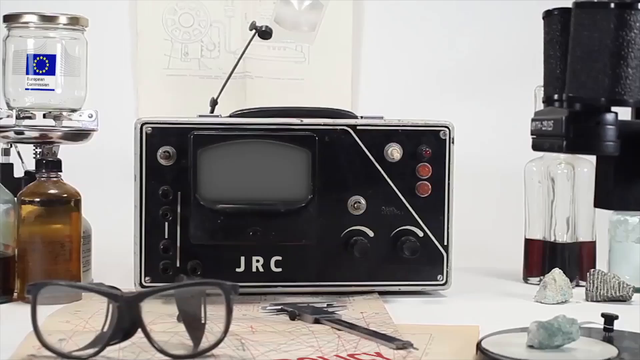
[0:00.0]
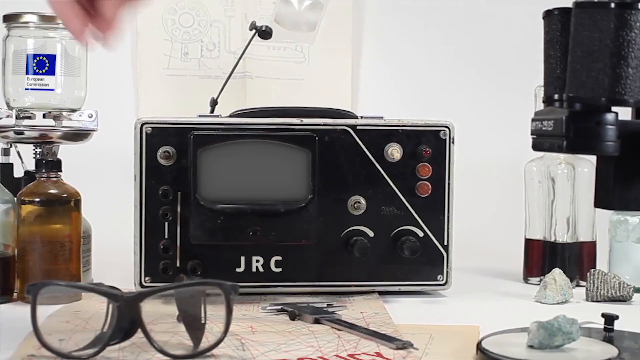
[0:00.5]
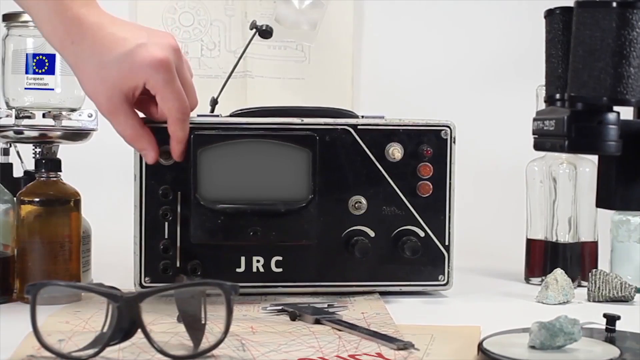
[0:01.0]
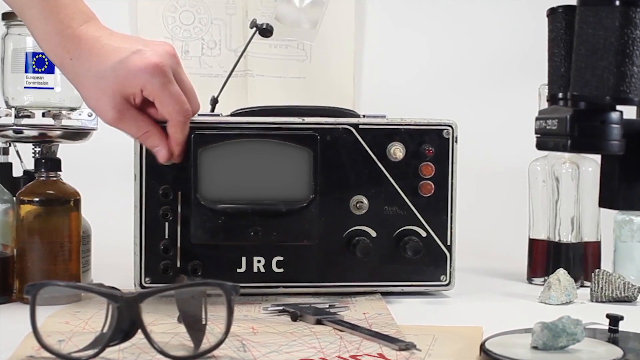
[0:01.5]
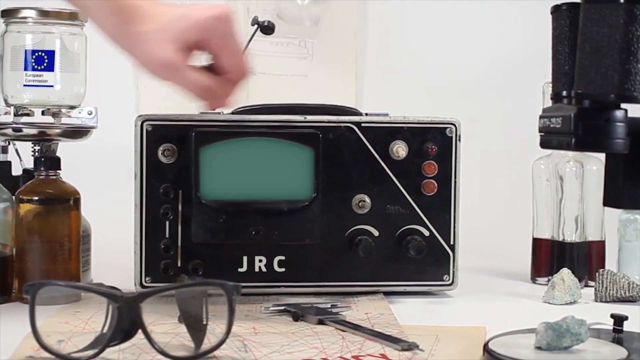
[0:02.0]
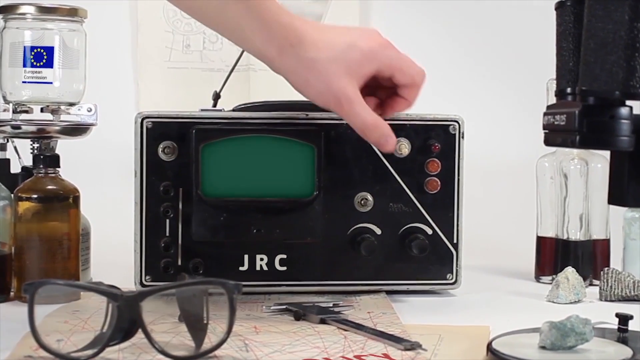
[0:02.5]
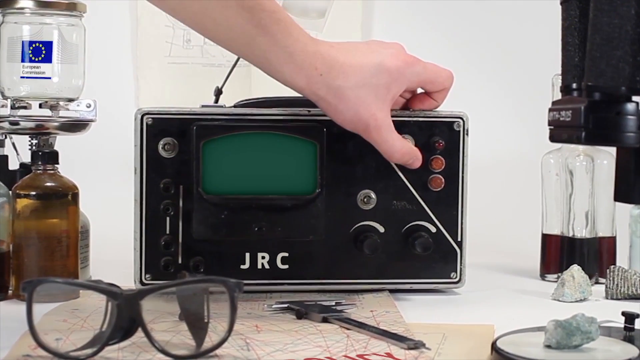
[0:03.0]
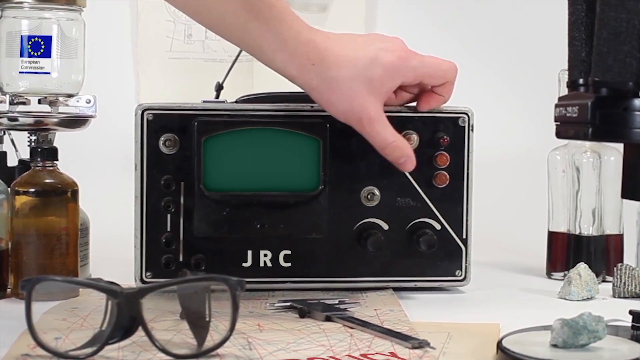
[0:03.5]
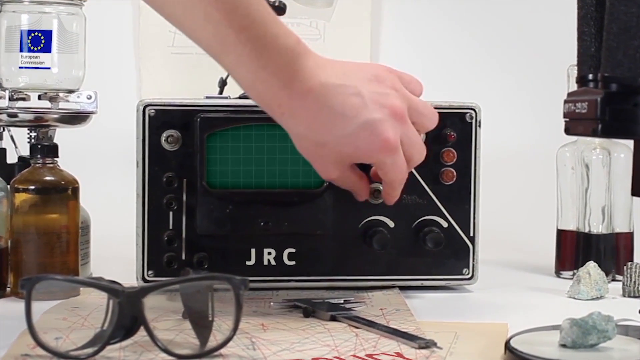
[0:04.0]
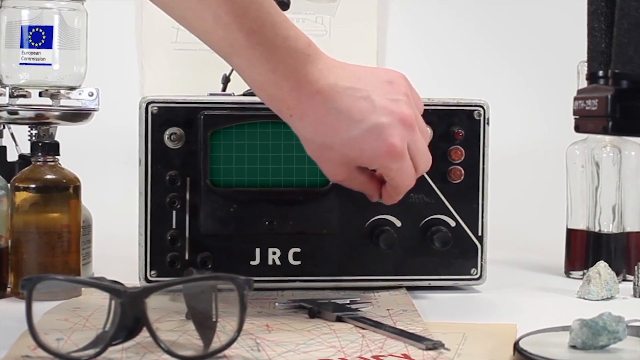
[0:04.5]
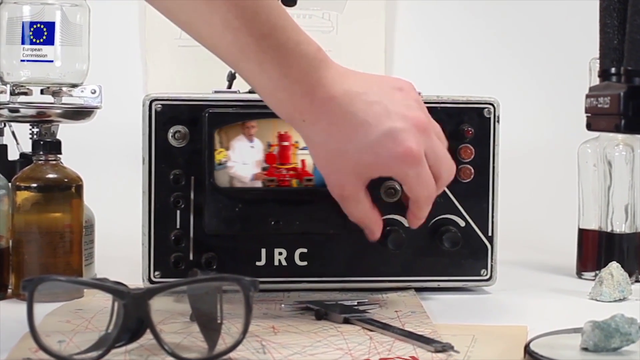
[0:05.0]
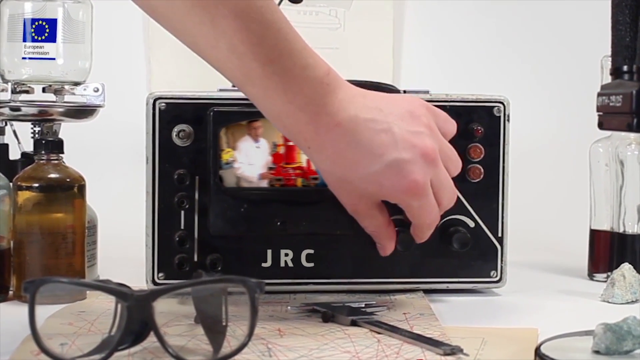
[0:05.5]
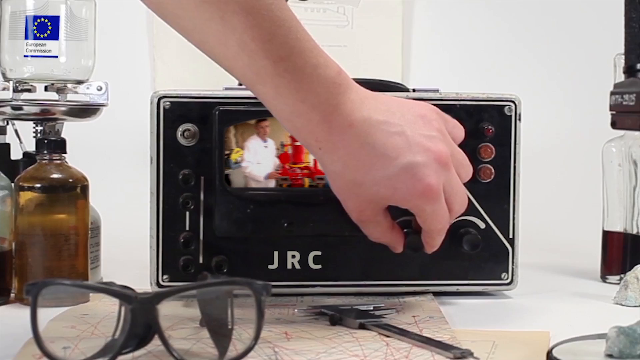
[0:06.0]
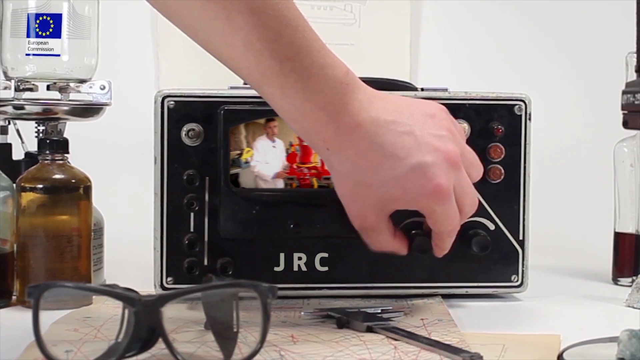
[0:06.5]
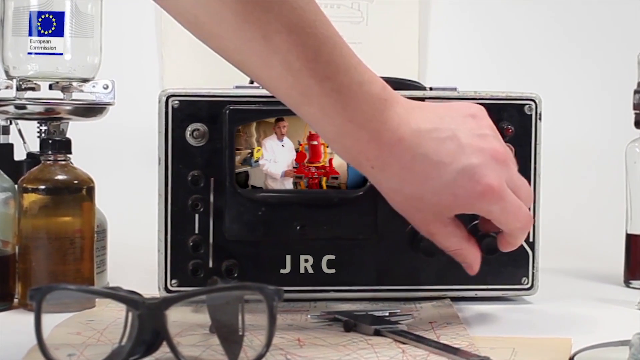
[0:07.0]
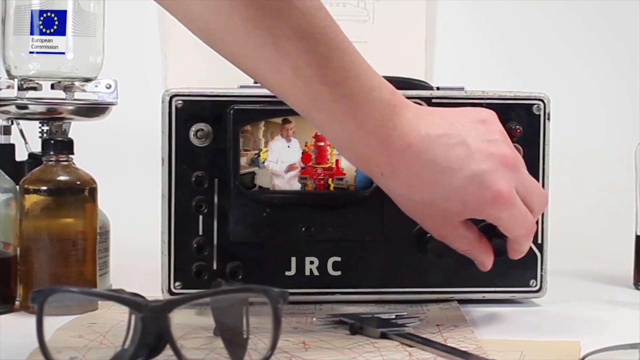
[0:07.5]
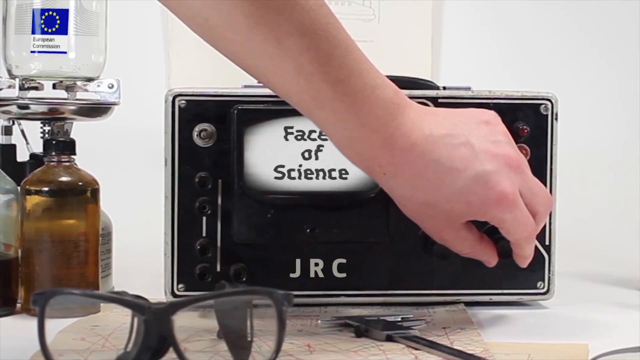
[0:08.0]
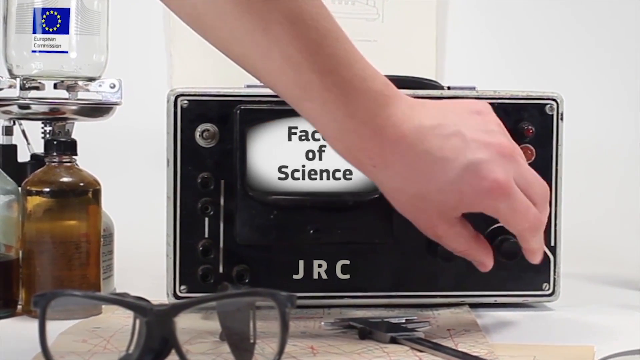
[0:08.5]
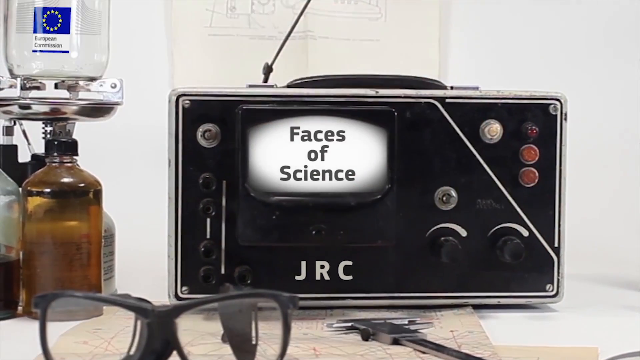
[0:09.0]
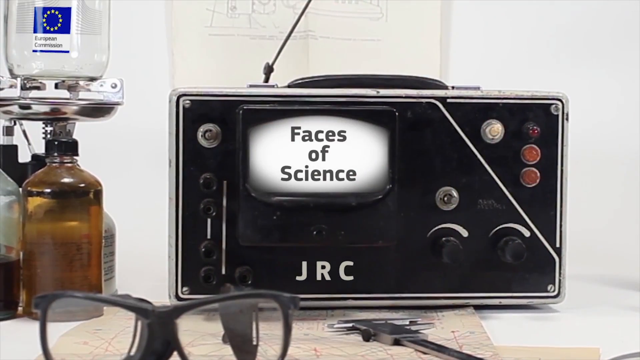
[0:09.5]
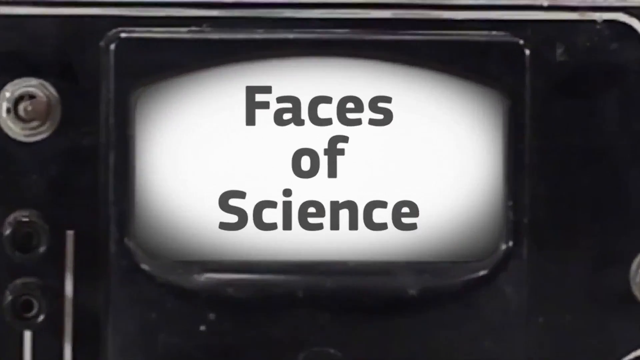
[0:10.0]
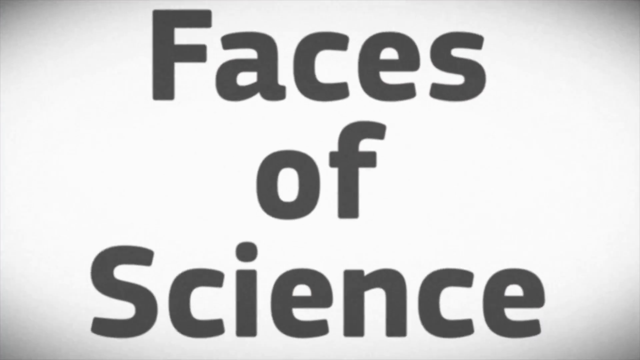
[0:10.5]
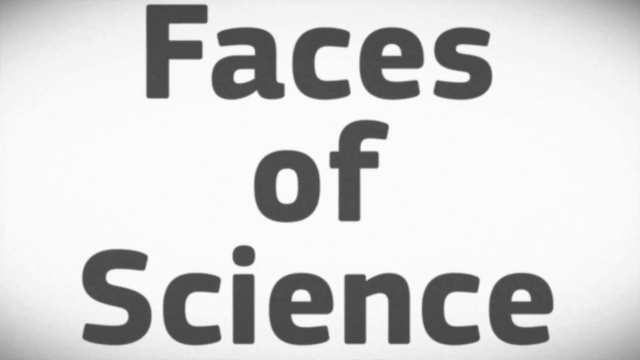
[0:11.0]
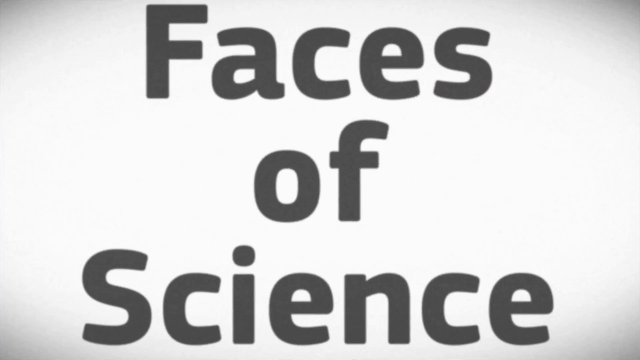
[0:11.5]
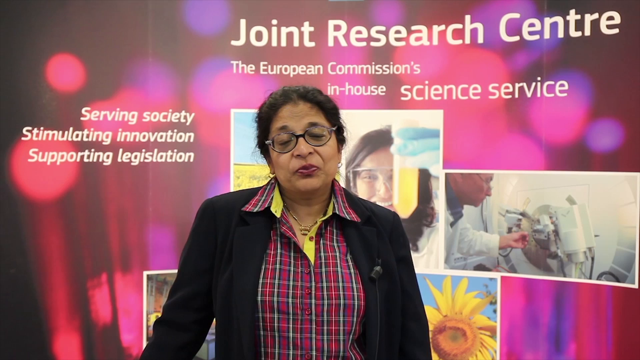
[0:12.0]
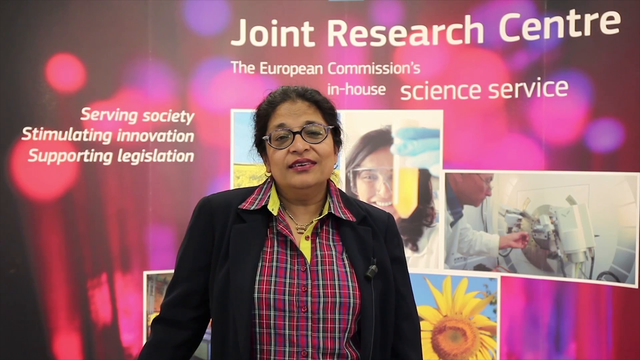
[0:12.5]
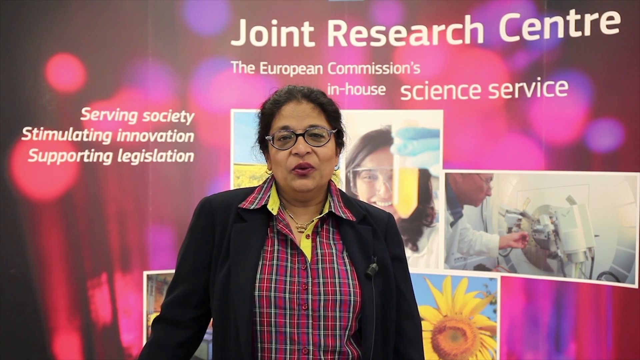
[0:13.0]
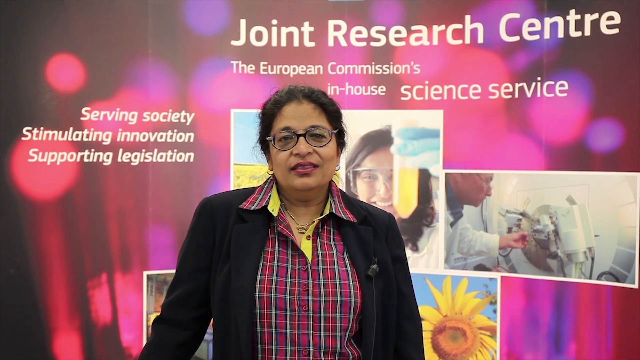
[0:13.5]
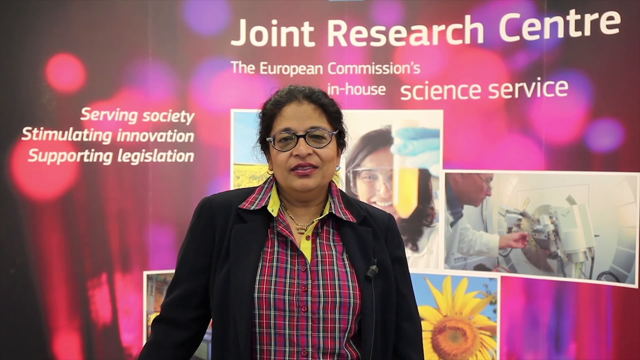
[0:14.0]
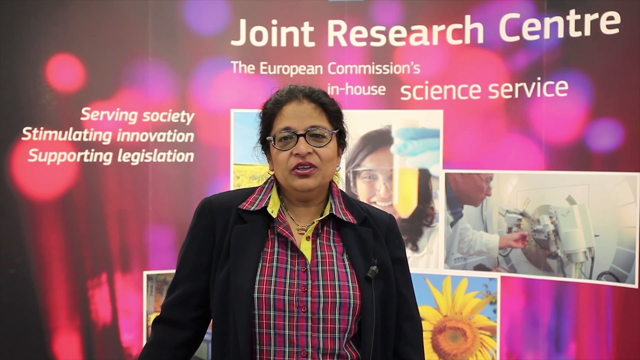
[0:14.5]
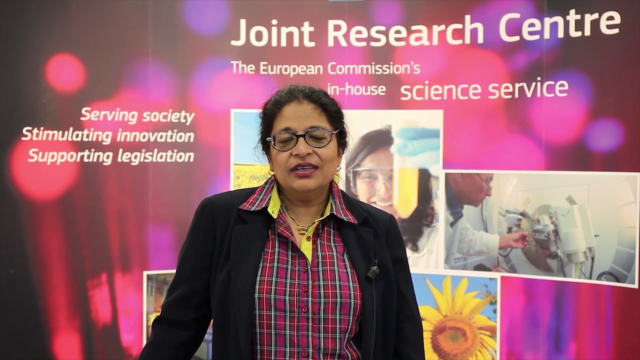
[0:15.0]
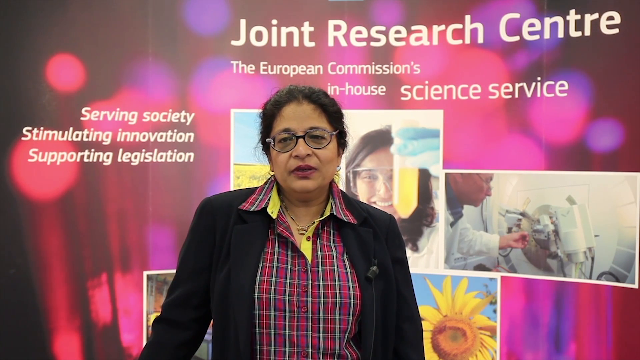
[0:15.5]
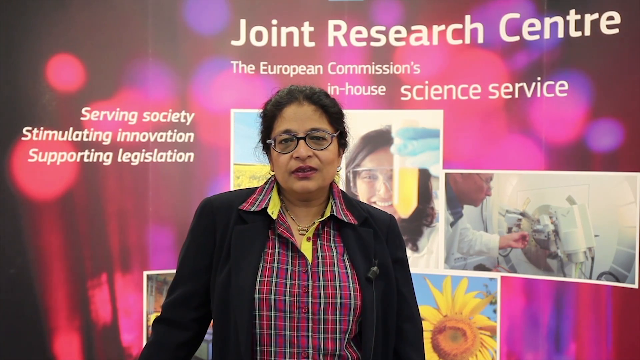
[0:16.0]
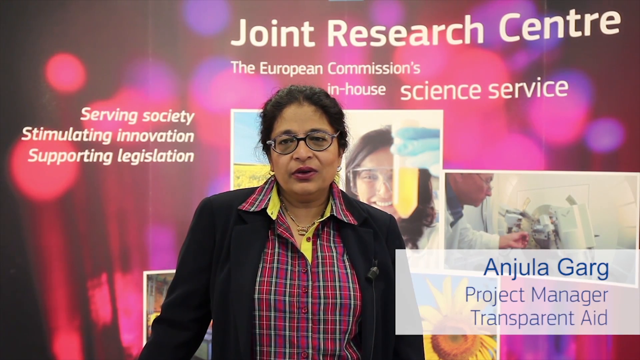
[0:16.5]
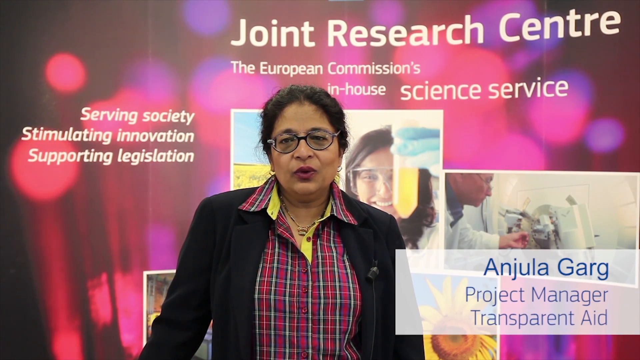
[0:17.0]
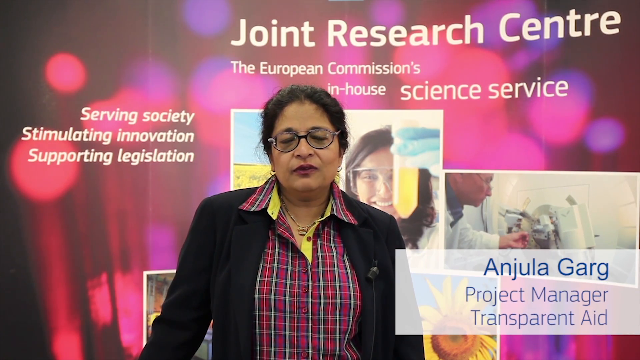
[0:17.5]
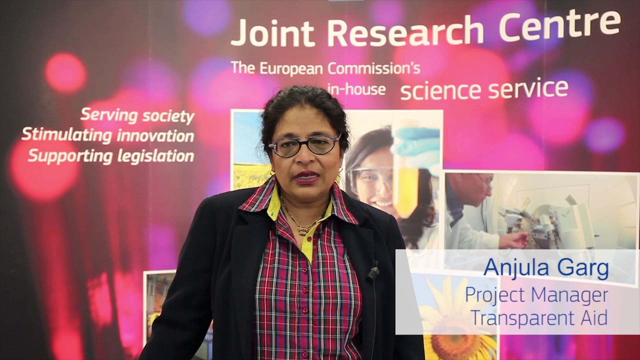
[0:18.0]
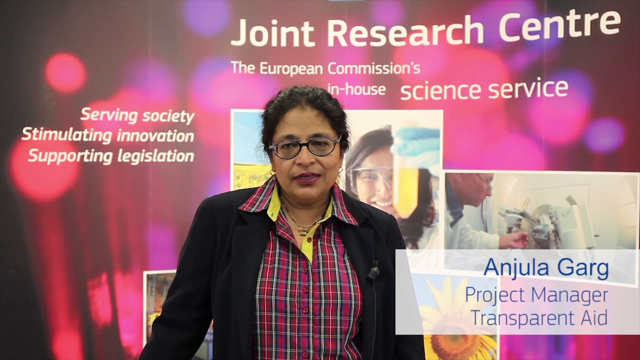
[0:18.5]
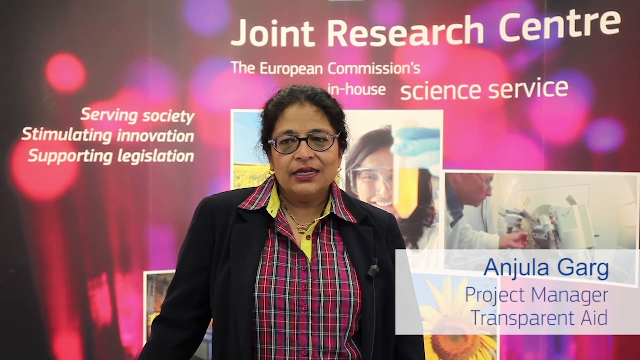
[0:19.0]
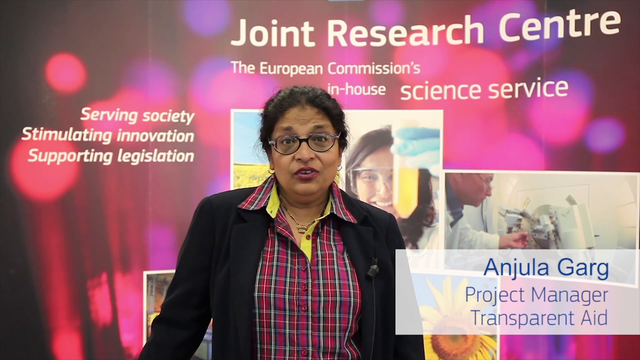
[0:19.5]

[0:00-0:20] The video focuses on what looks somewhat like a tiny TV, though it apparently is not one: a box with a lot of buttons and dials, with "JRC" in white letters at the bottom. It has a small screen that looks to be about four inches long by two inches tall, and it seems to have a small antenna. Next to this monitor-like device are lots of bottles, in stacks. One to the left says "European Commission"; it is an empty, clear glass bottle with a brass top that looks like a jam jar. Below it are a bunch of tinted bottles. A left hand comes over and turns one of the knobs, then fiddles with other things. A picture of a scientist comes on with the text "faces of science." Then an Indian woman wearing a plaid shirt appears, with the text "joint research center."